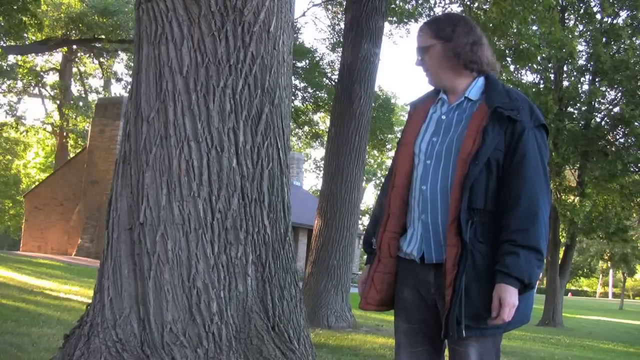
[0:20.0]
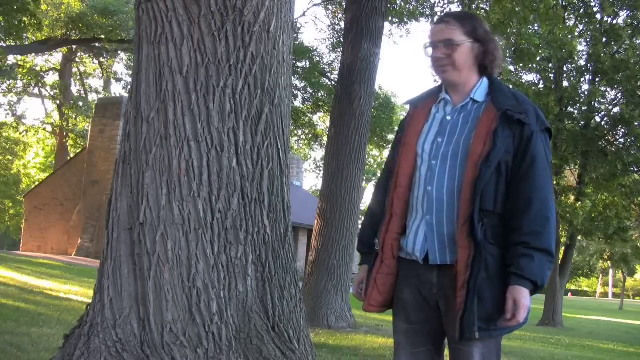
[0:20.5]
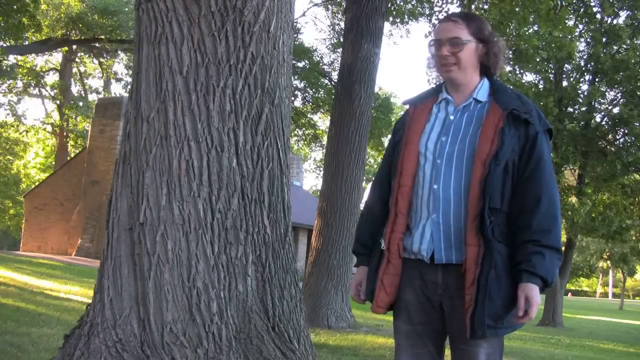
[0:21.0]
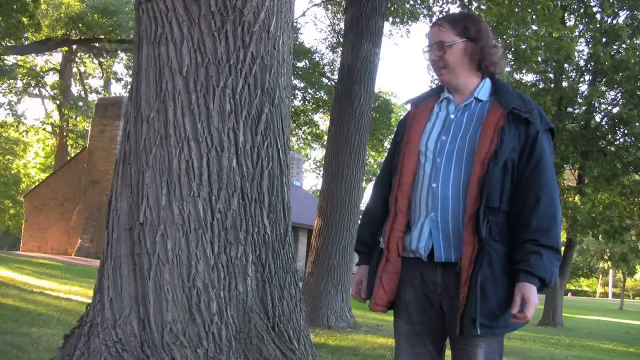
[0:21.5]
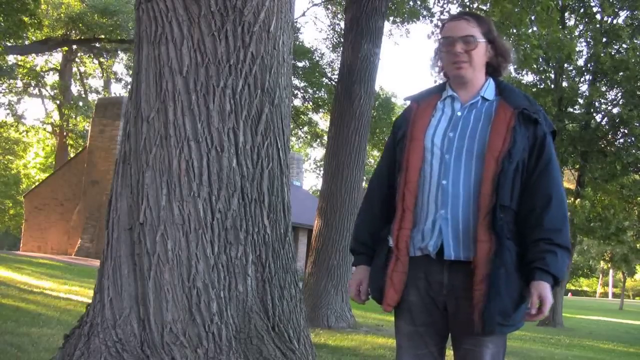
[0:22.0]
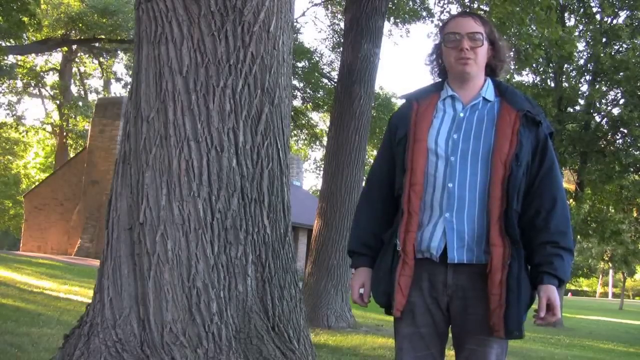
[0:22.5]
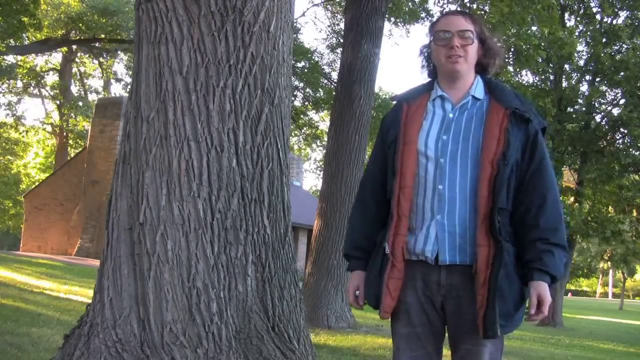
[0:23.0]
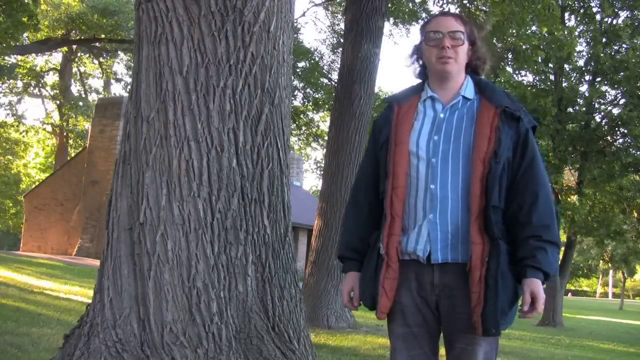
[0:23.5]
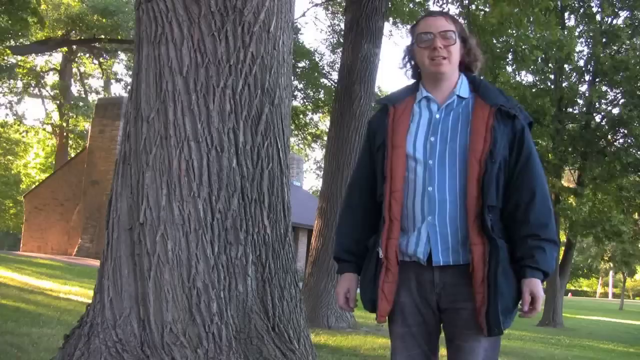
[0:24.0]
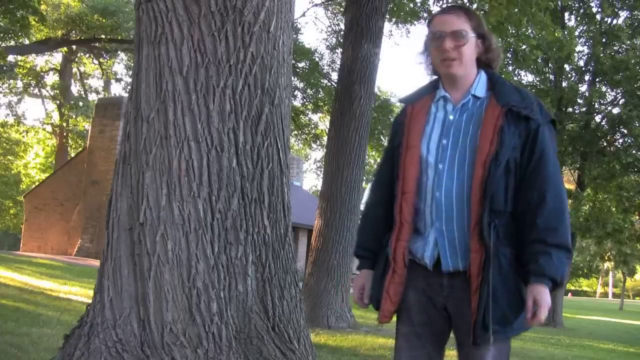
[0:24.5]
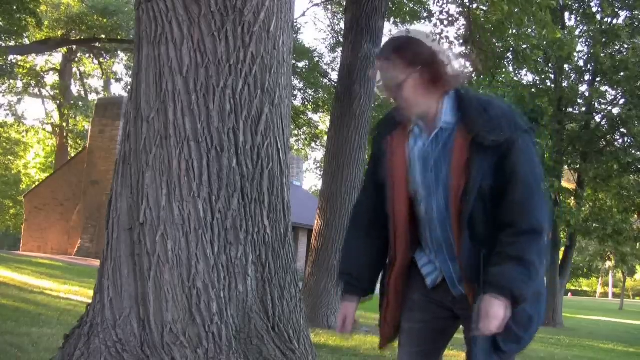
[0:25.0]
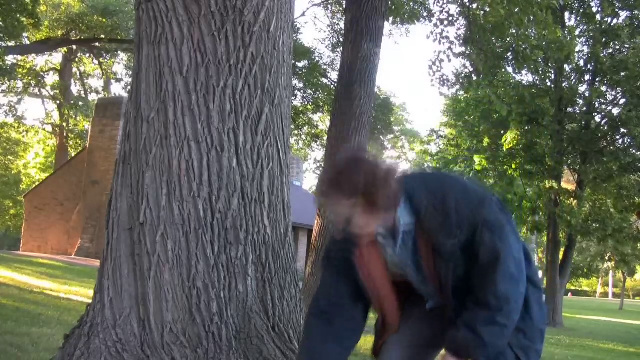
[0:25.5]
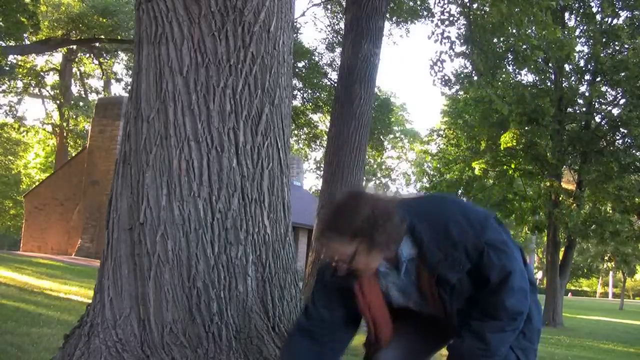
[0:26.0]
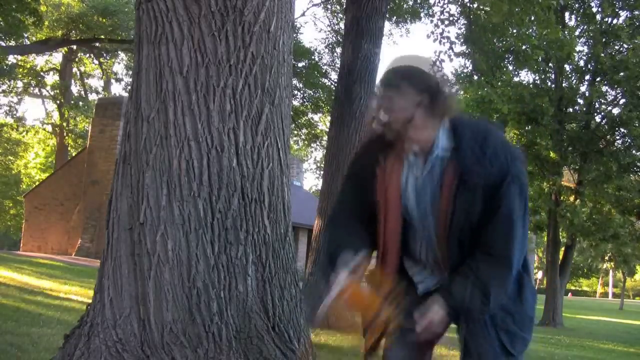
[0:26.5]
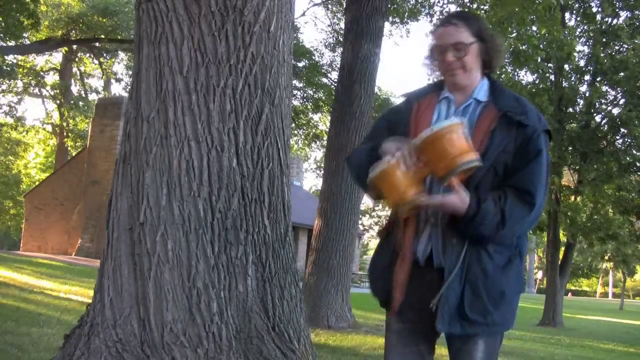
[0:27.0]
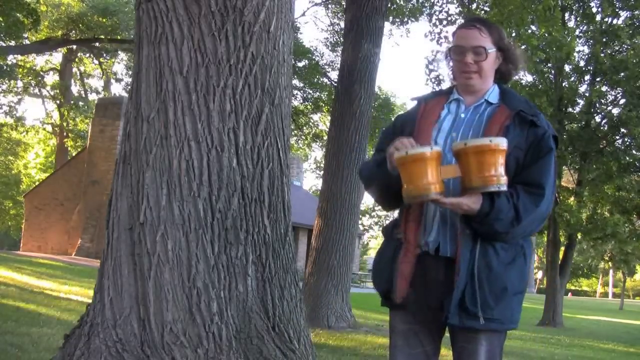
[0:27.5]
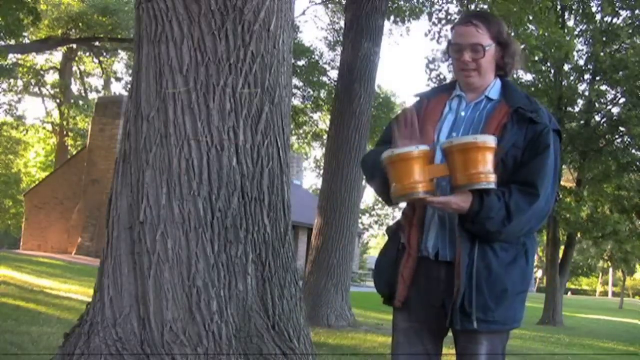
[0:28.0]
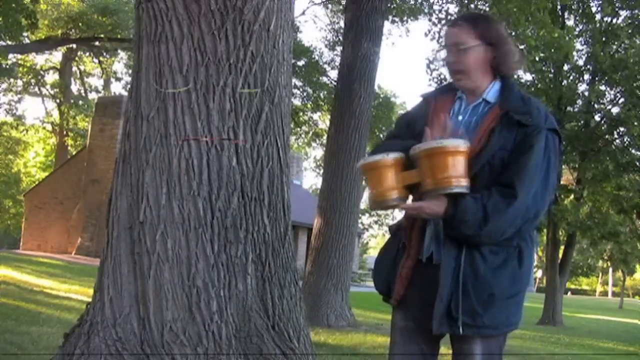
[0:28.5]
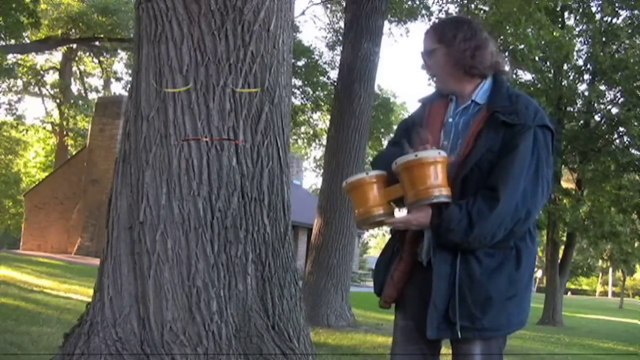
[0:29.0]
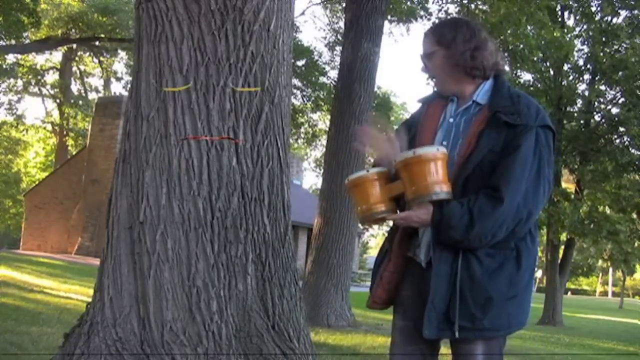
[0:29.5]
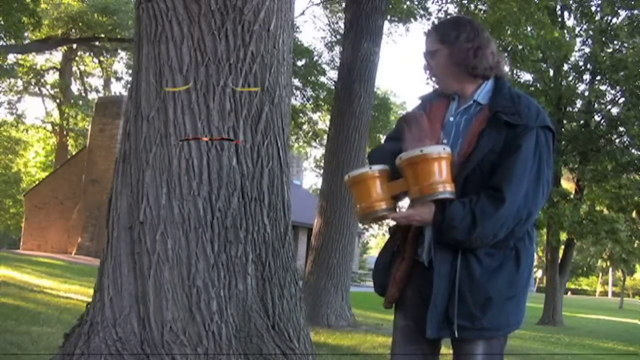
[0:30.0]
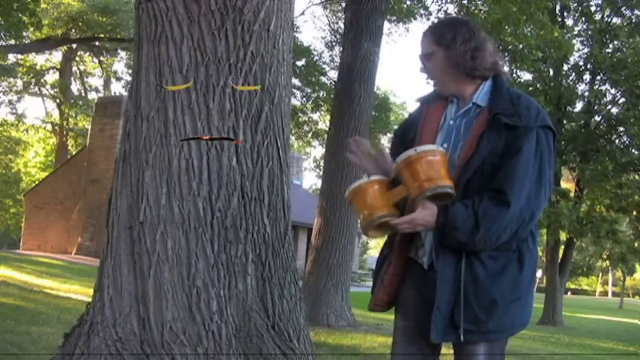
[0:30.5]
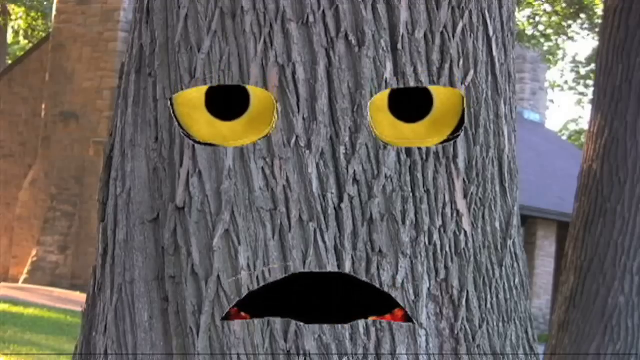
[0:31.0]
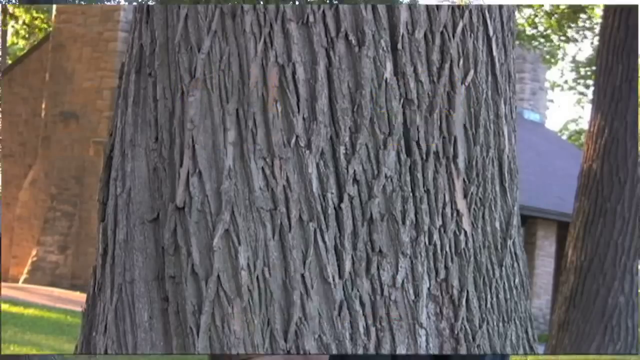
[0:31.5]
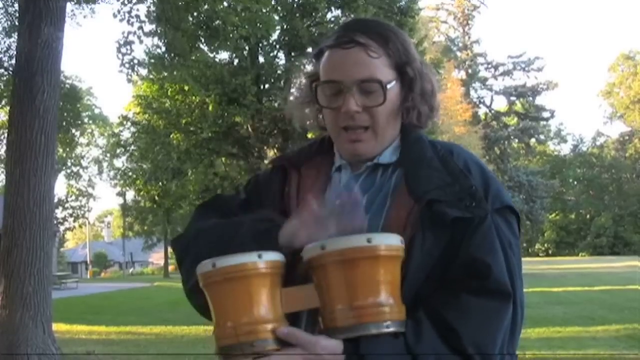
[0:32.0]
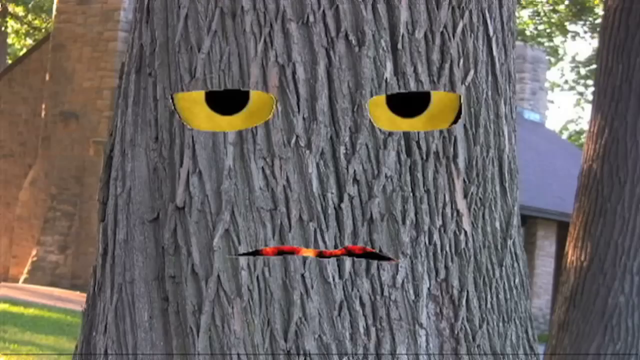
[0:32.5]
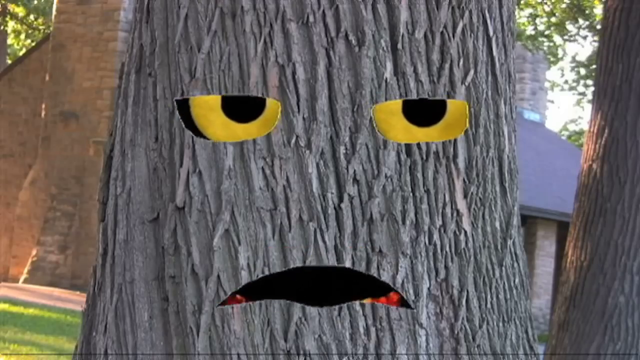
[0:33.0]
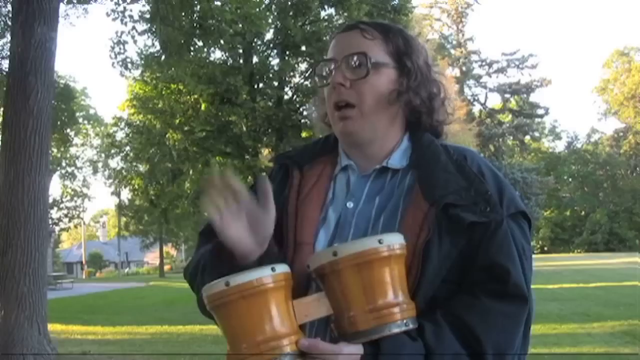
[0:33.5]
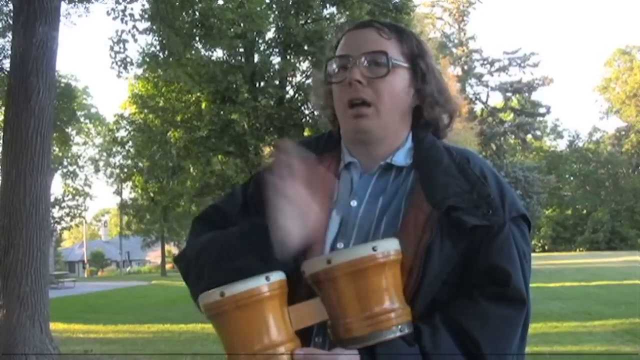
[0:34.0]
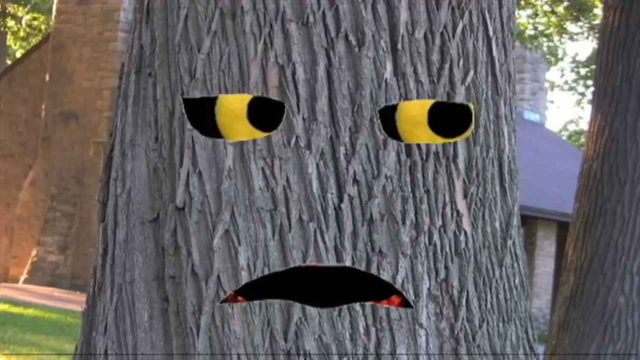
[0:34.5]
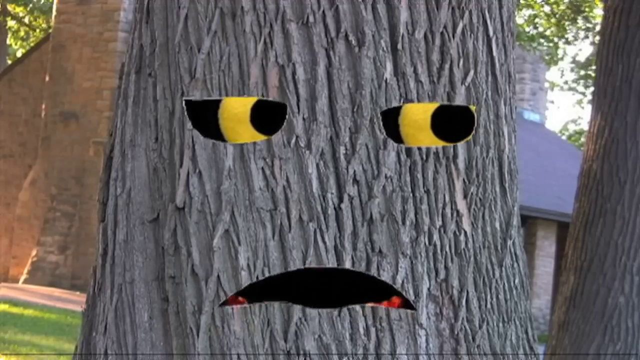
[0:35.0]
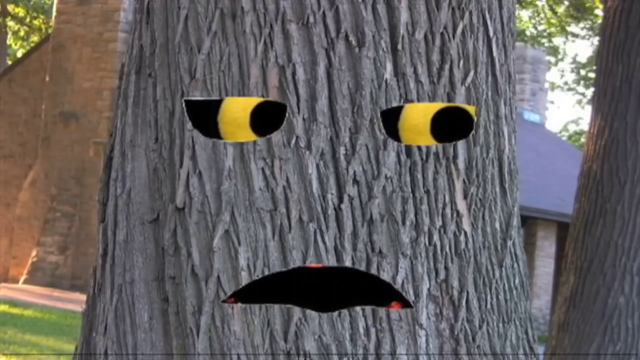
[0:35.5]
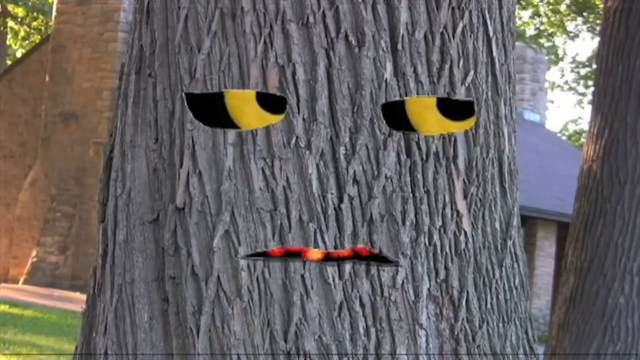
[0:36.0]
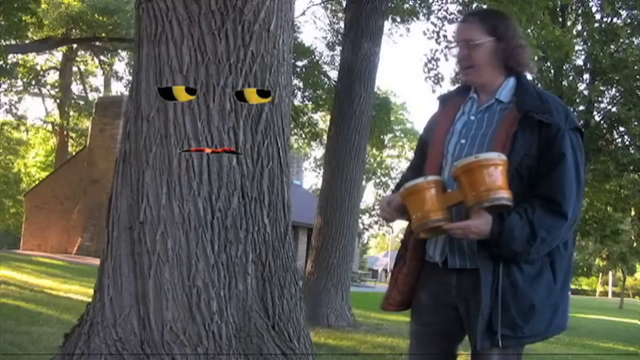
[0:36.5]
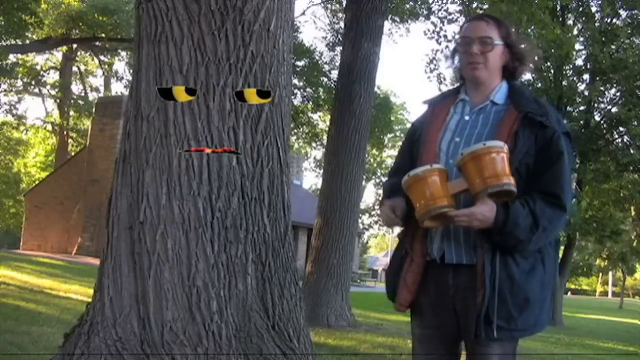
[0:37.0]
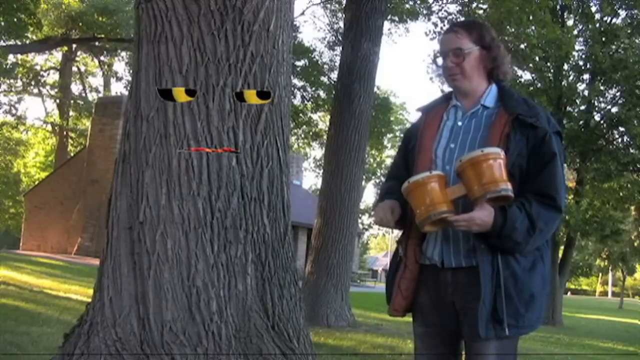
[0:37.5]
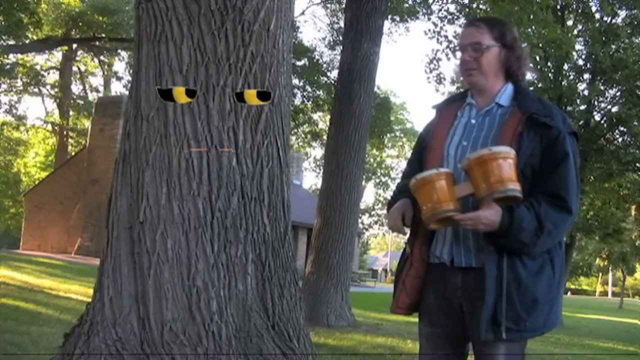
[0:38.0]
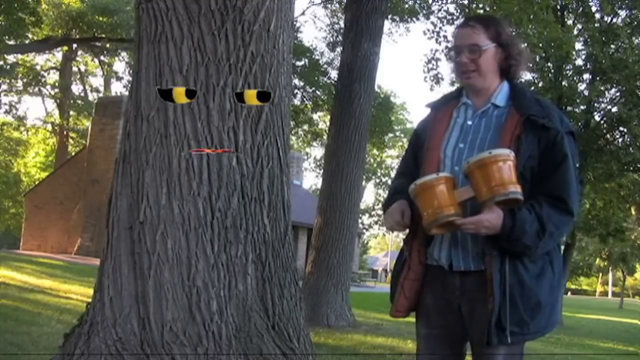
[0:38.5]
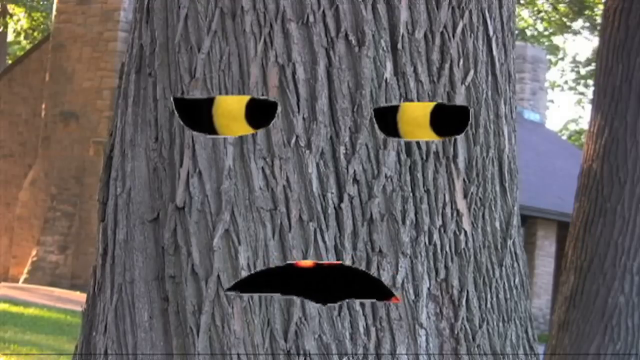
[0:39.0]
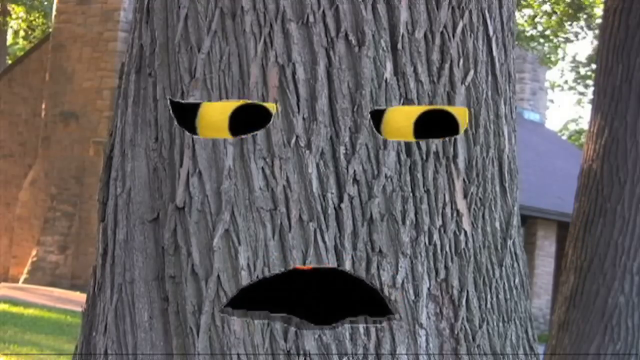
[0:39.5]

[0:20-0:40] The man looks back toward the camera and keeps talking. He kneels down and grabs something from below the tree: a pair of bongos. He starts hitting the bongos with one hand, striking different sides of them. A close-up of the tree shows it has eyes and a mouth; the eyes are closed at first and then open. The shots alternate between close-ups of the man with the bongos and close-ups of the tree. As the tree talks, it has sort of a frowny face, its yellow and black eyes half open, so it kind of looks like it is on drugs. A shot of the tree and the man follows, then a close-up of the tree.